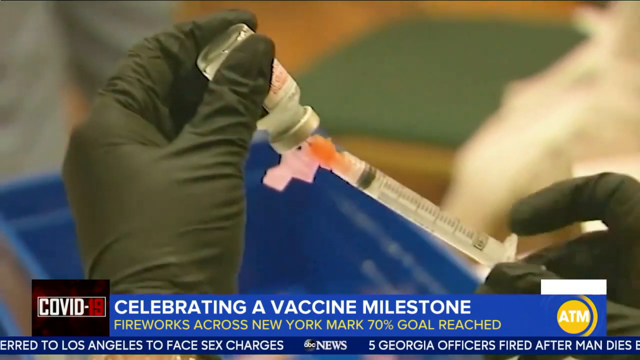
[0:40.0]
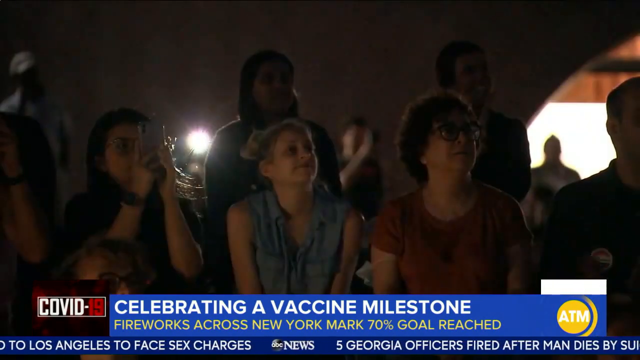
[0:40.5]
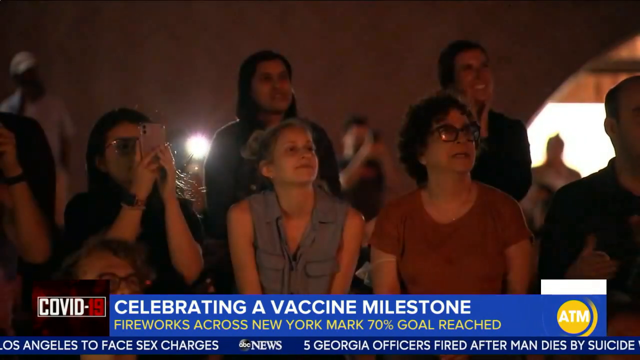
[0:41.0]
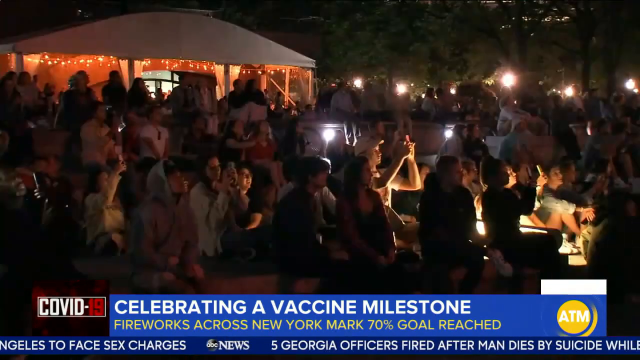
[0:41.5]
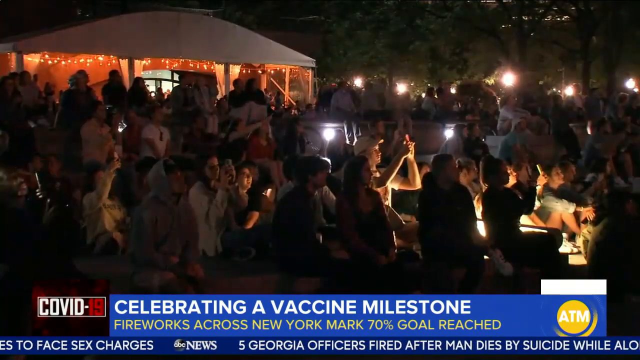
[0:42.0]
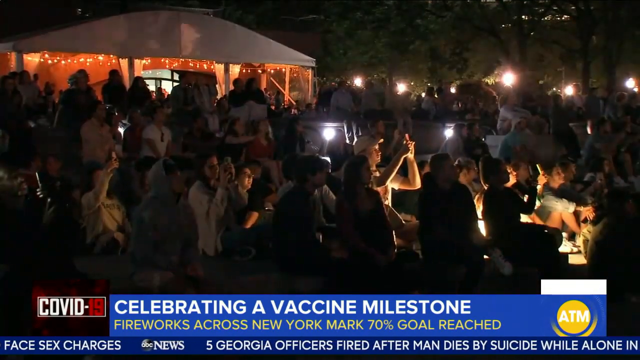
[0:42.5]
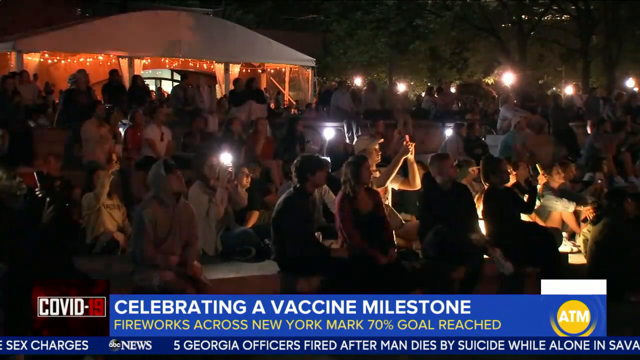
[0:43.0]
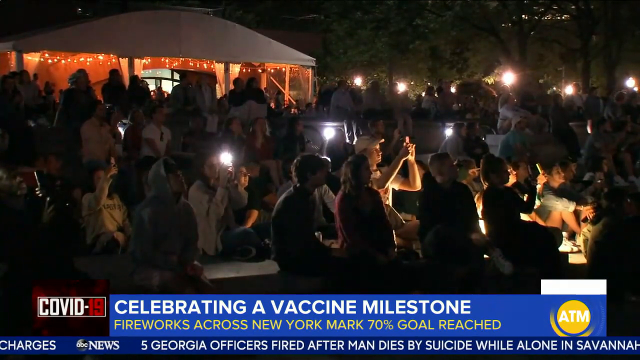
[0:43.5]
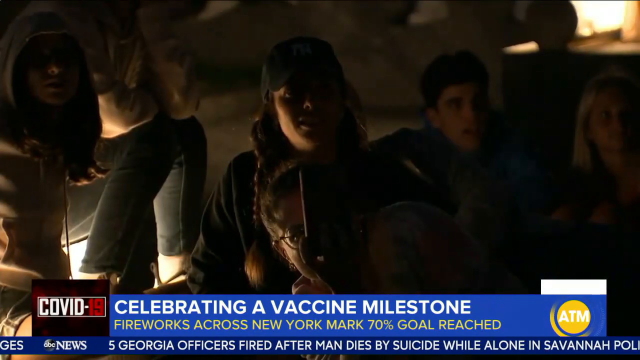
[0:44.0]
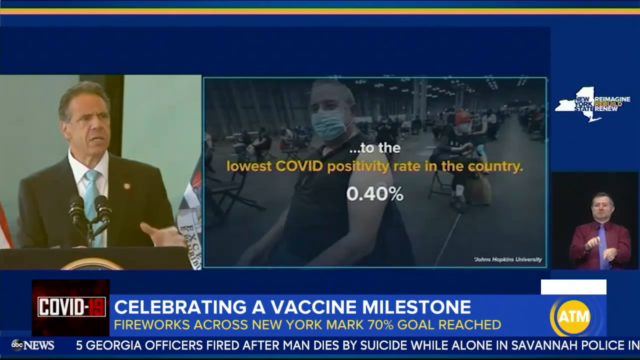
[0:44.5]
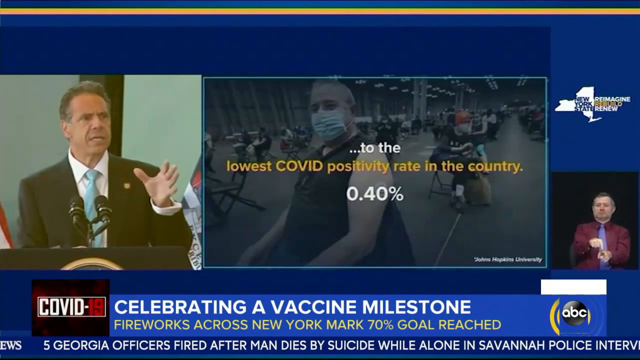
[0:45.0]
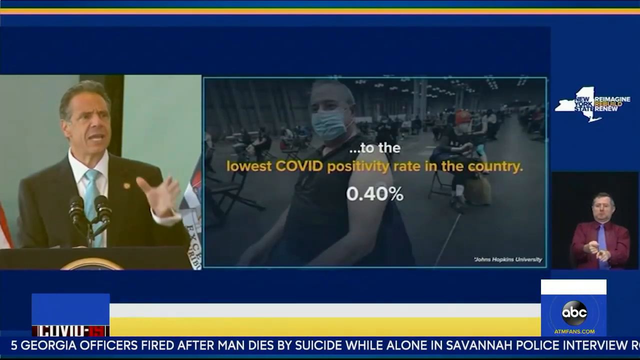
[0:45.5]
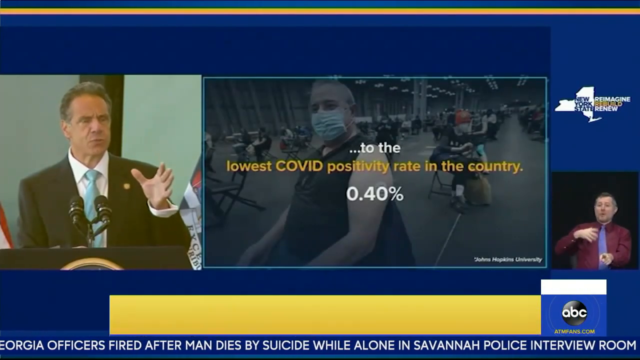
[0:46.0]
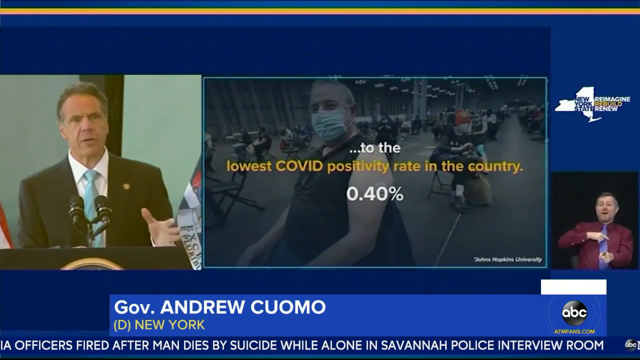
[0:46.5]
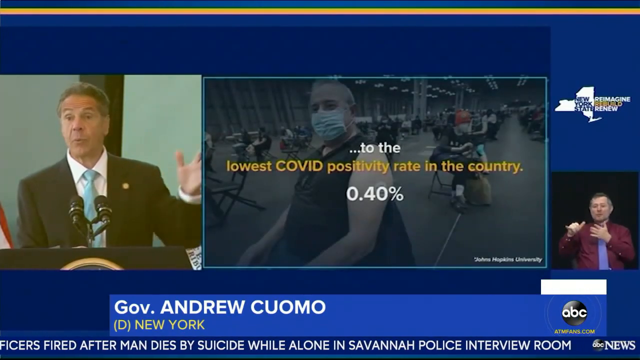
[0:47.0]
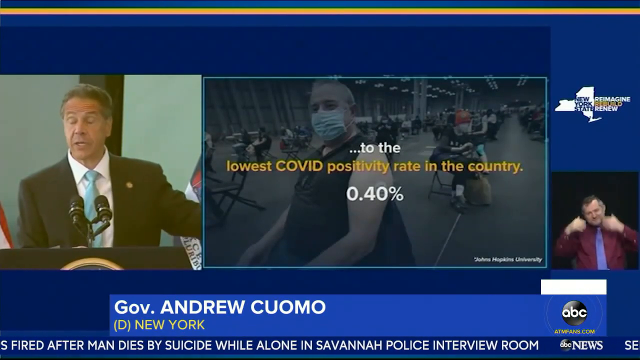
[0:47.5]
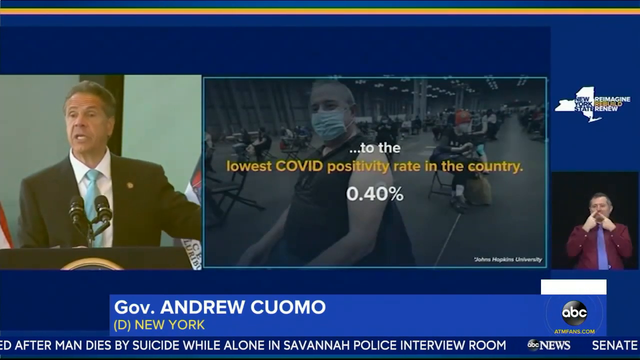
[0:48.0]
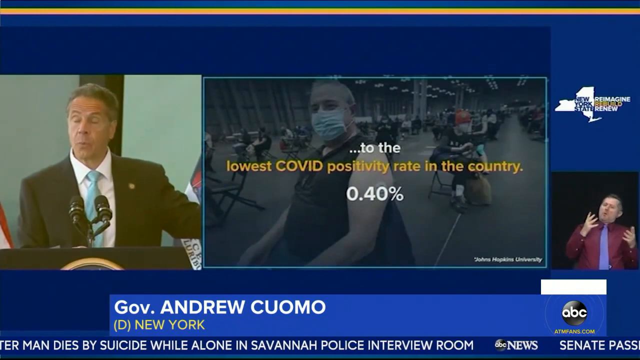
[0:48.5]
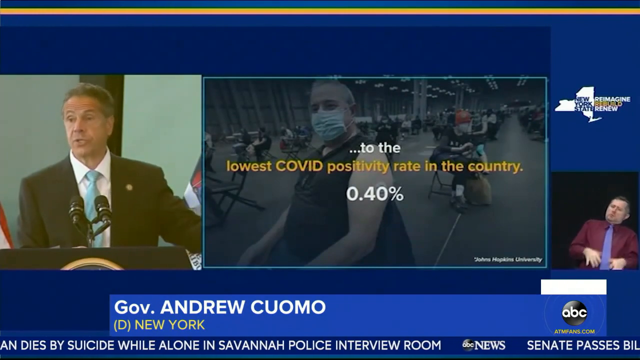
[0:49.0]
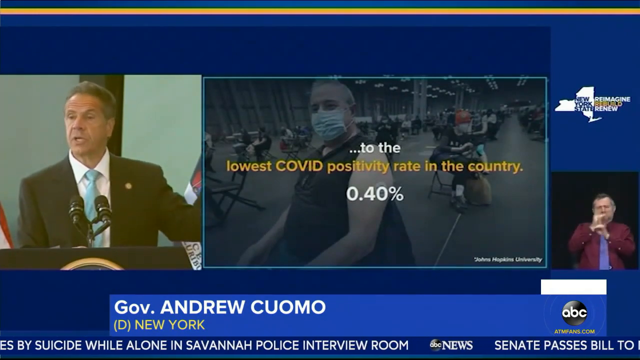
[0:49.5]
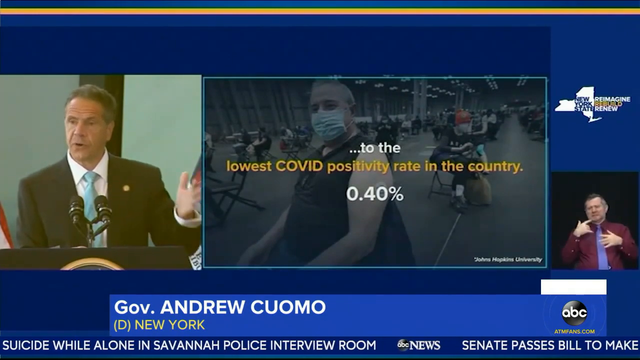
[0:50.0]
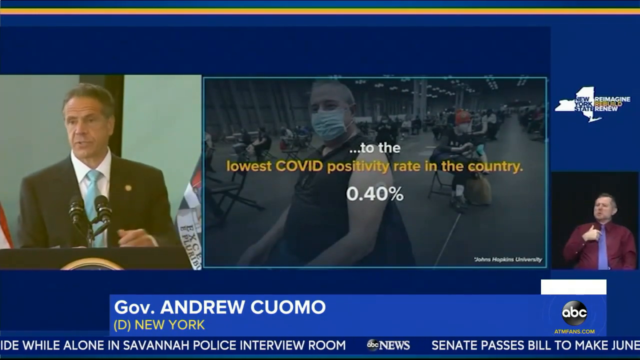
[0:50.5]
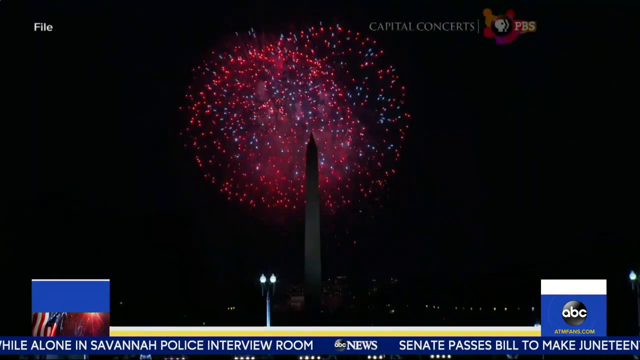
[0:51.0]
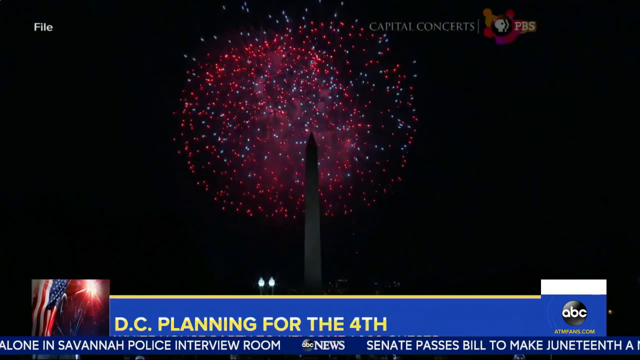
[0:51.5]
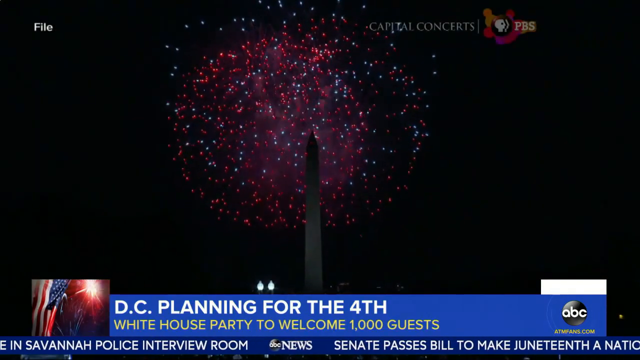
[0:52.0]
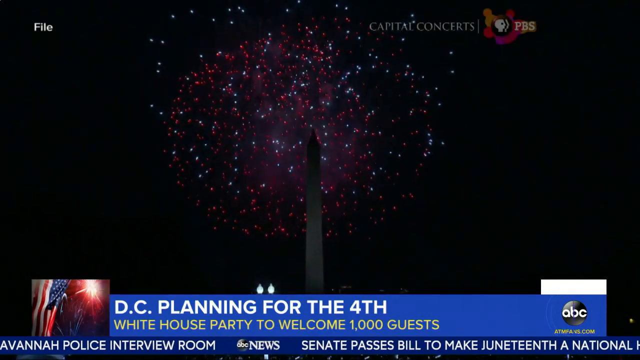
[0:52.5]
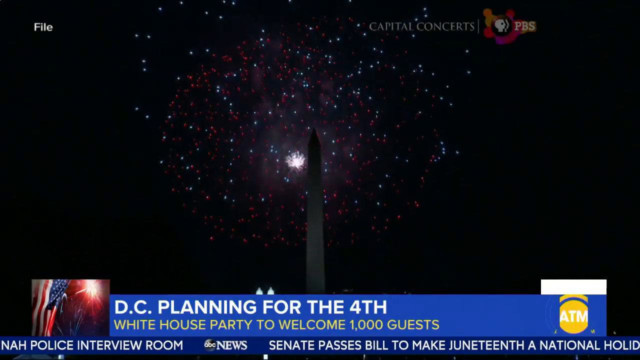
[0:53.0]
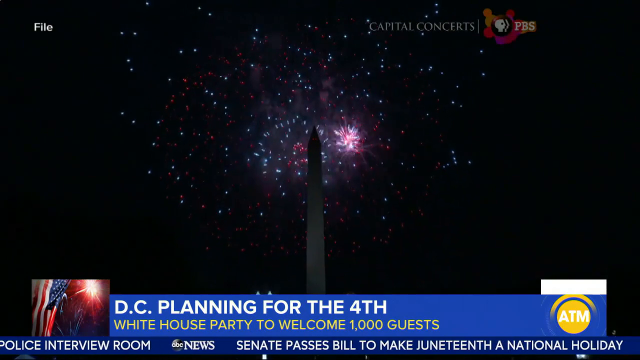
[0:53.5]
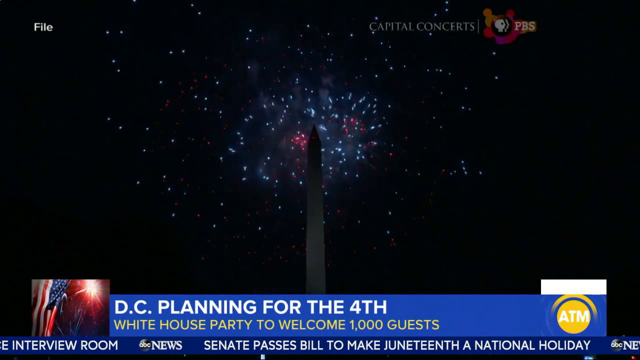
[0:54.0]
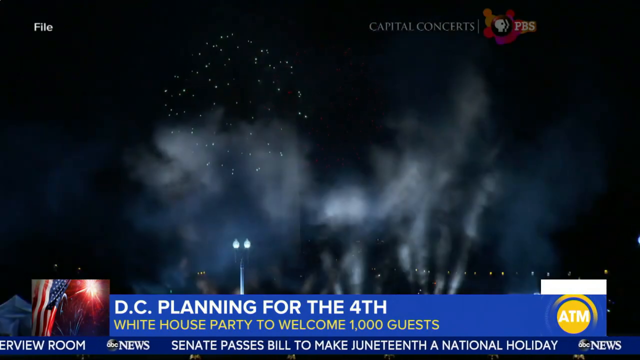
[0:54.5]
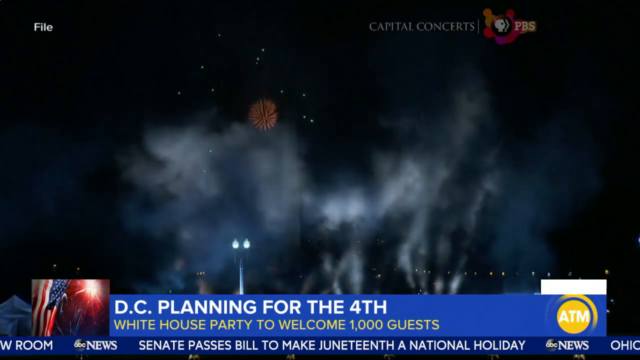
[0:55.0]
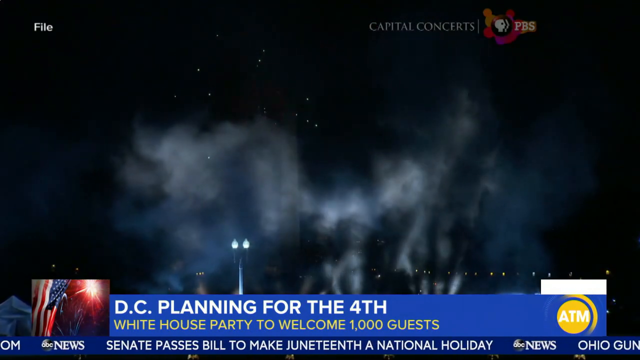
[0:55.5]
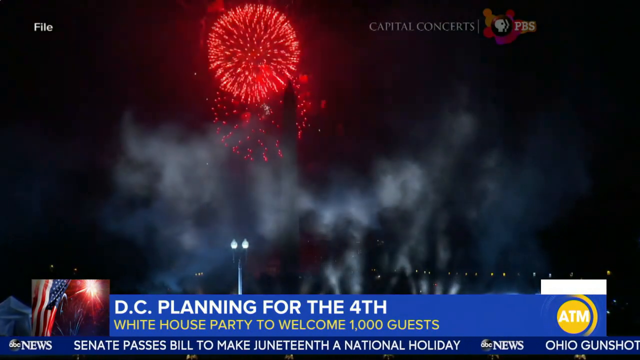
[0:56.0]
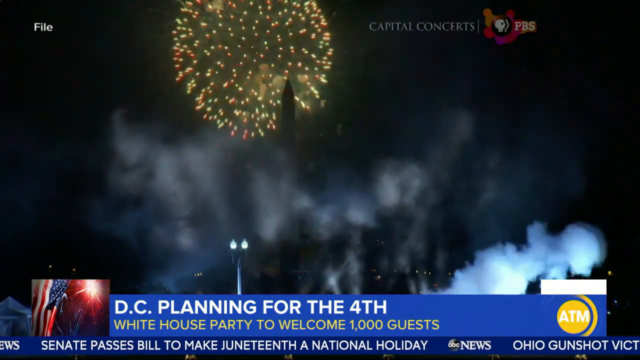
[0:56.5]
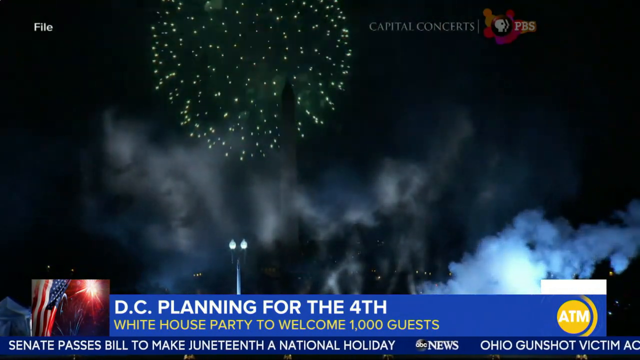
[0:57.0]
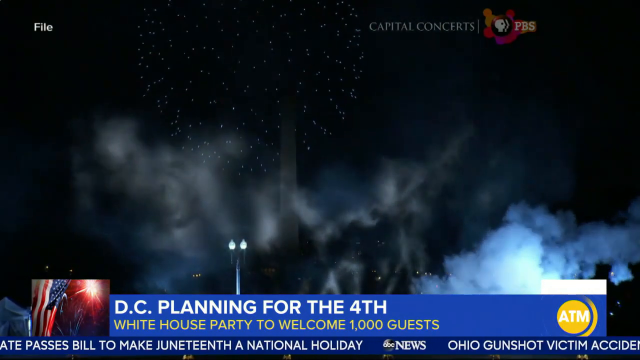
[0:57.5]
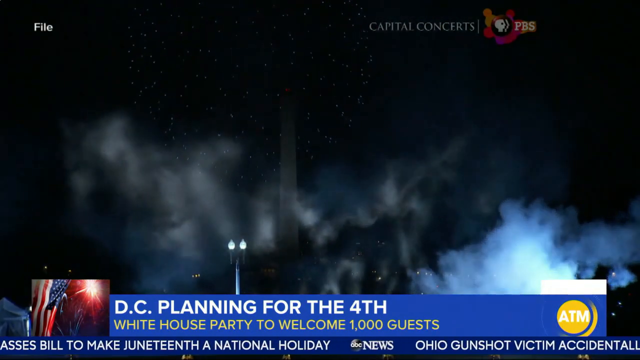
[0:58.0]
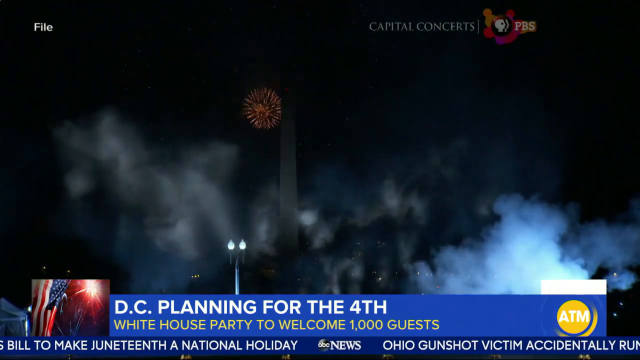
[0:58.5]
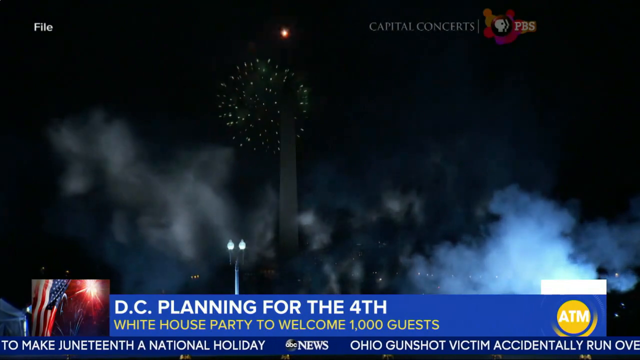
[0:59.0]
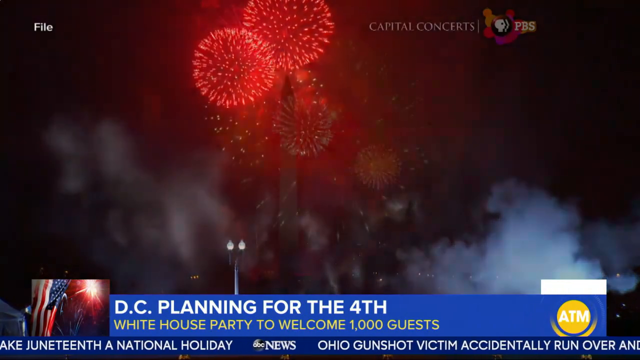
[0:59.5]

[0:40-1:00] A person wearing big black latex gloves holds a needle with the right hand and a container with the left, and seems to be piercing the container with the needle. A whole bunch of people at night look up at the sky, holding cell phones. The video cuts to a politician standing in front of a podium on the left side, while the right side shows text reading "to the lowest COVID positivity rate in the country 0.40 percent," with a person wearing a mask in the background of that text. The bottom of the screen reads "governor Andrew Cuomo," and on the right side of the screen a person in a dress shirt does sign language. The video cuts to a night sky with fireworks going off behind what looks like a monument shaped like a long thin pyramid. Another angle of the sky shows more red and green fireworks, with some smoke appearing in the foreground at the bottom of the screen. Text at the bottom reads "DC planning for the 4th."